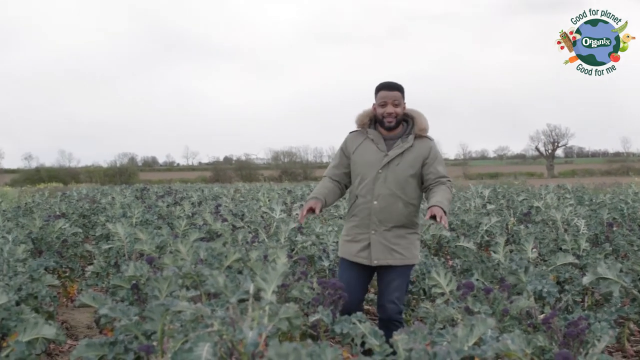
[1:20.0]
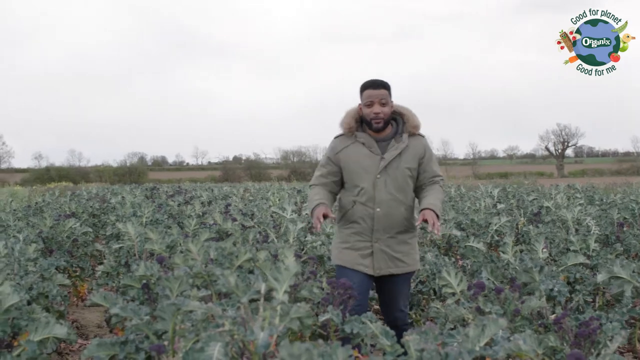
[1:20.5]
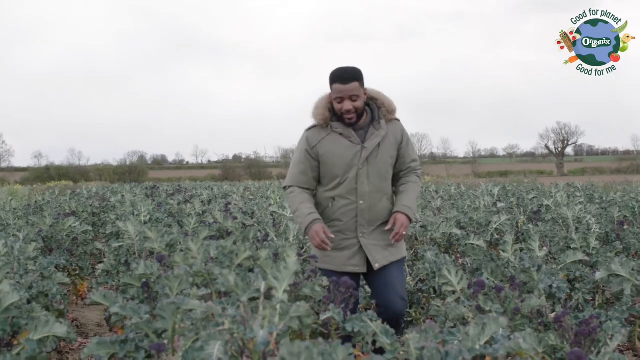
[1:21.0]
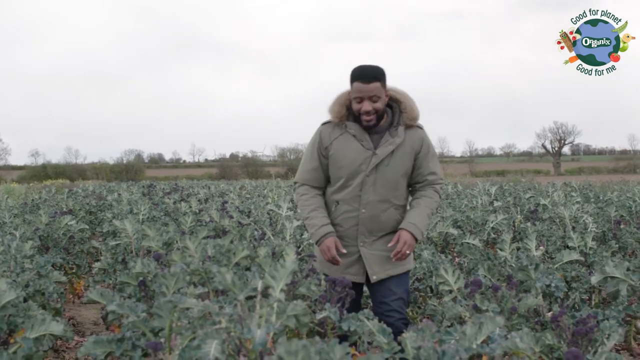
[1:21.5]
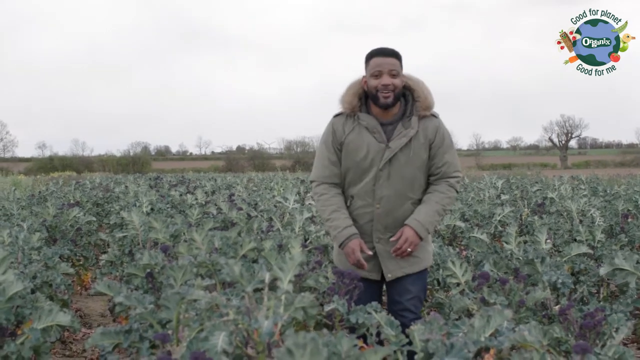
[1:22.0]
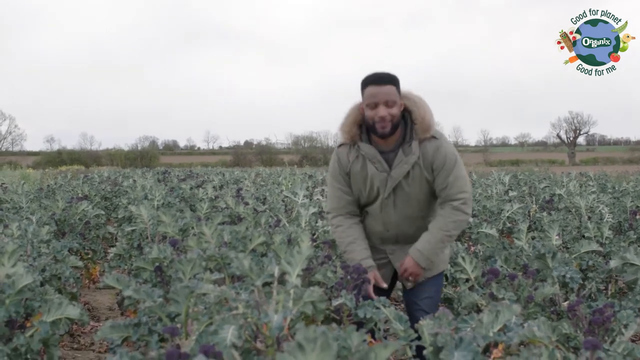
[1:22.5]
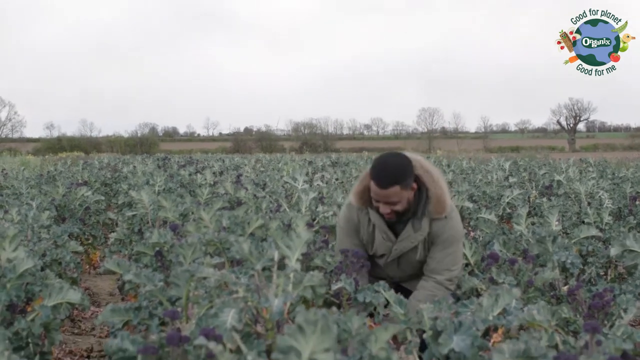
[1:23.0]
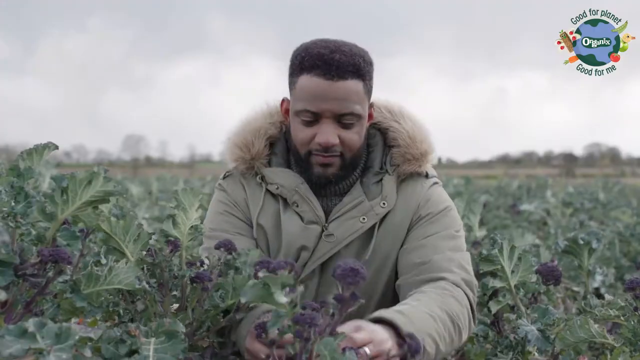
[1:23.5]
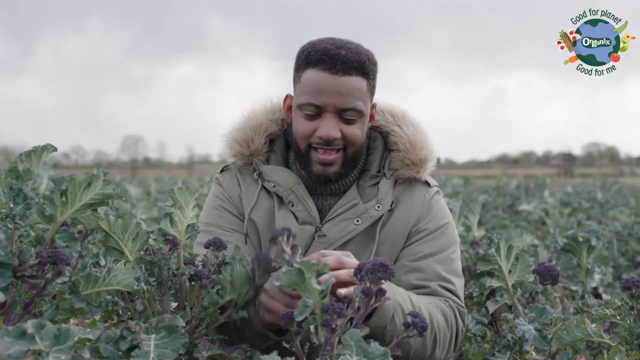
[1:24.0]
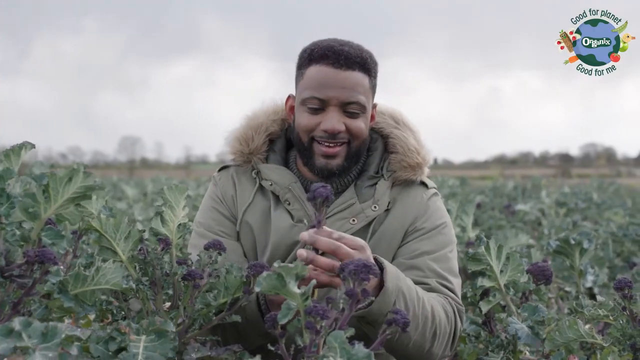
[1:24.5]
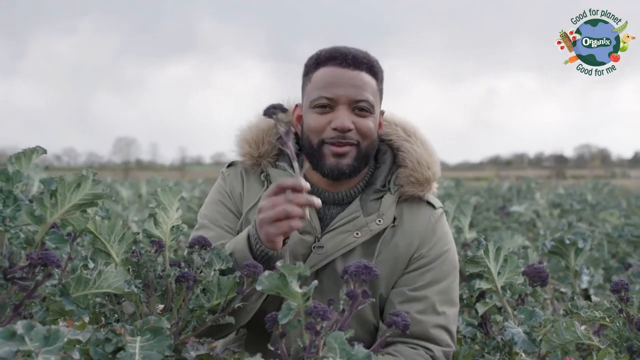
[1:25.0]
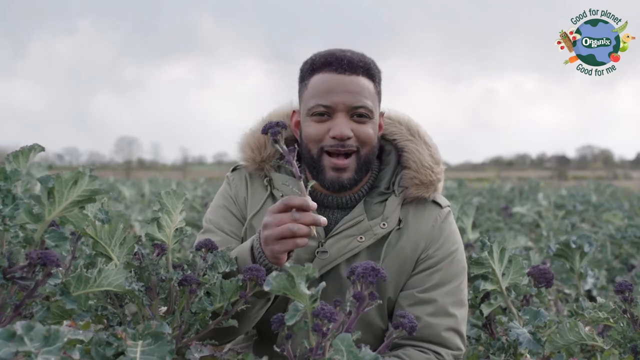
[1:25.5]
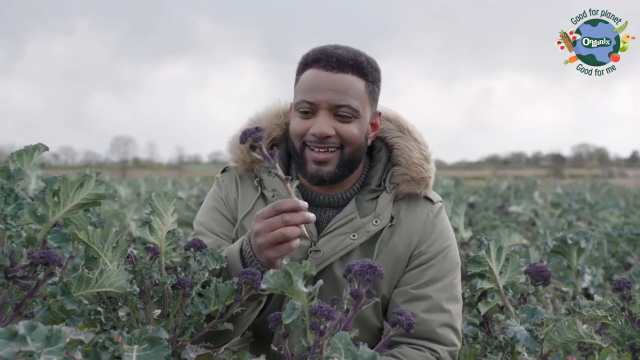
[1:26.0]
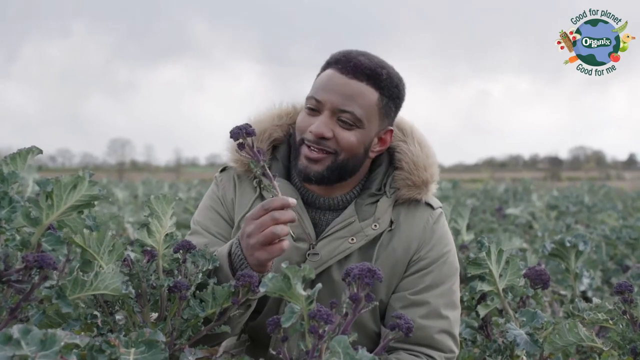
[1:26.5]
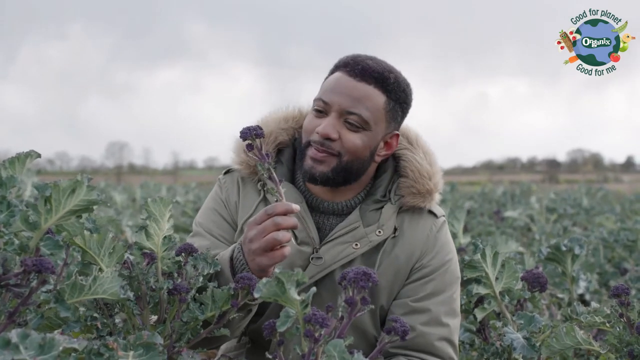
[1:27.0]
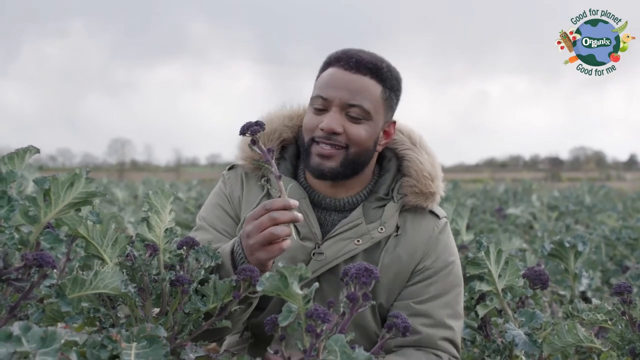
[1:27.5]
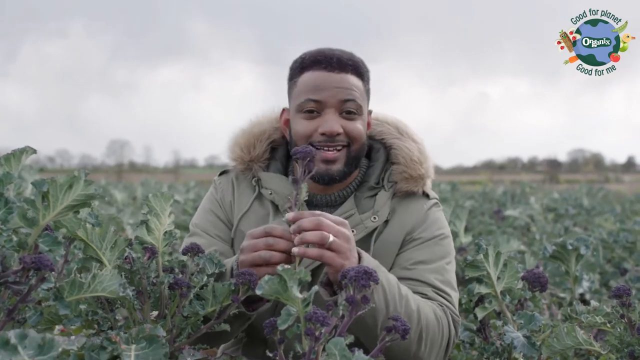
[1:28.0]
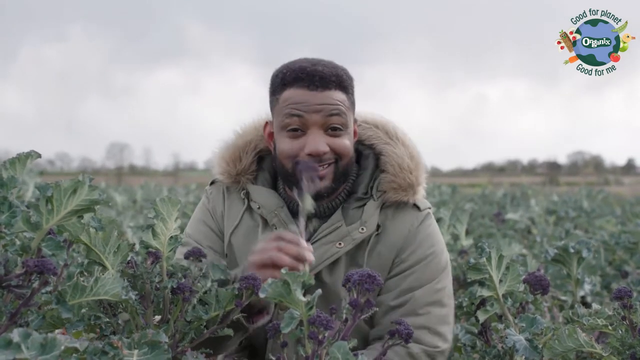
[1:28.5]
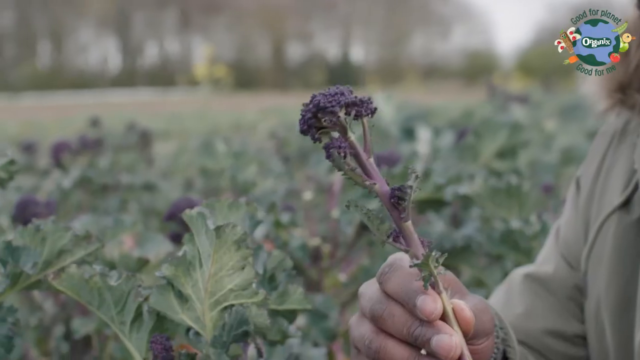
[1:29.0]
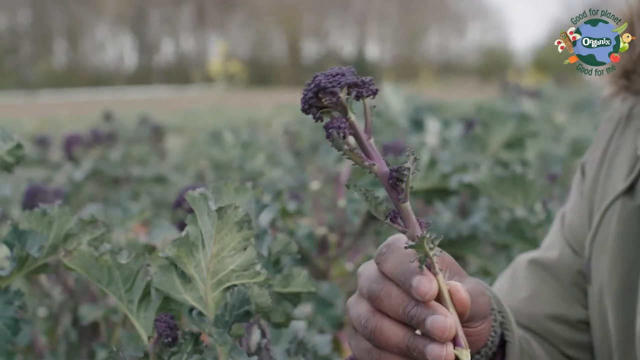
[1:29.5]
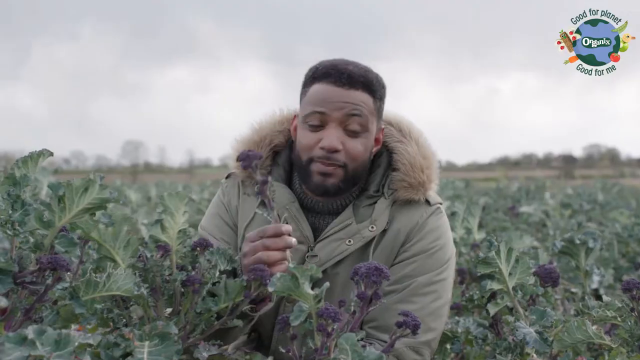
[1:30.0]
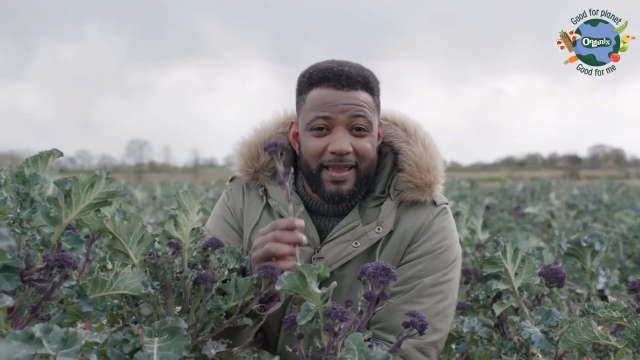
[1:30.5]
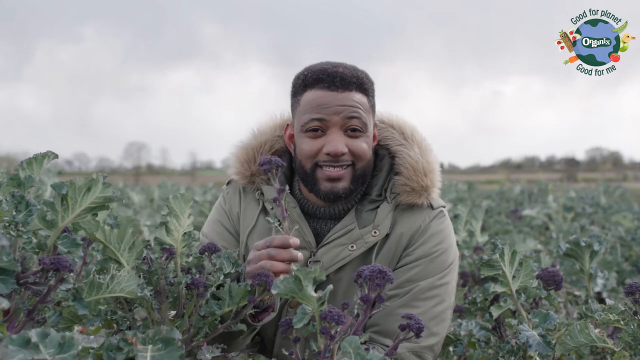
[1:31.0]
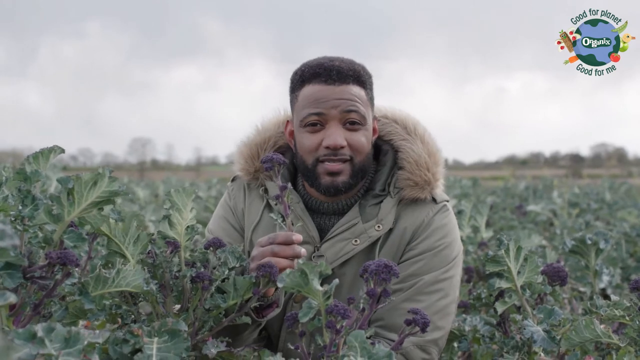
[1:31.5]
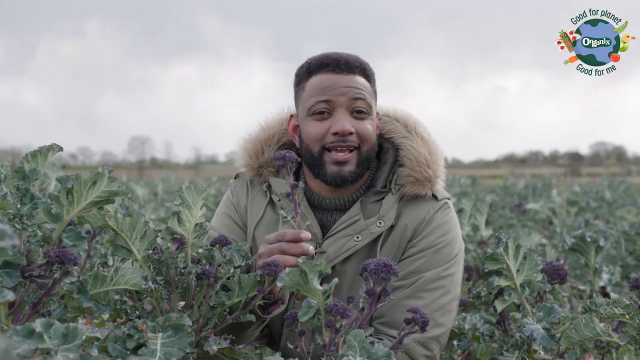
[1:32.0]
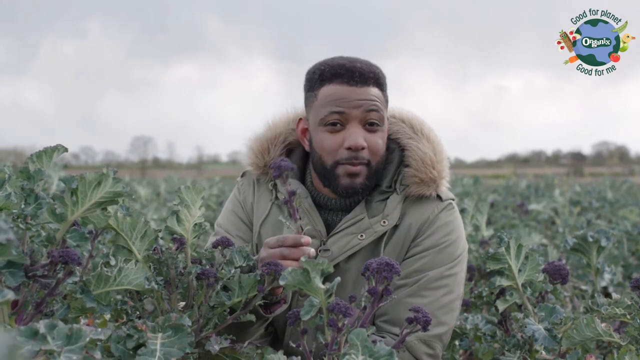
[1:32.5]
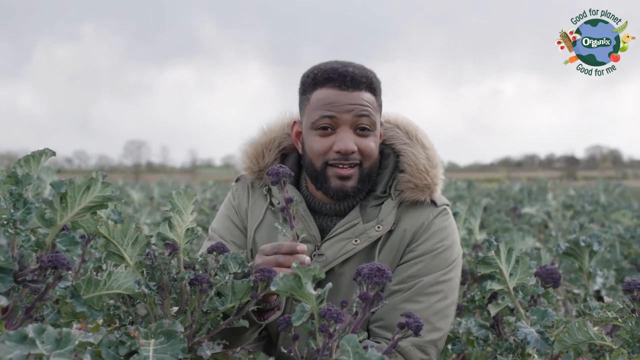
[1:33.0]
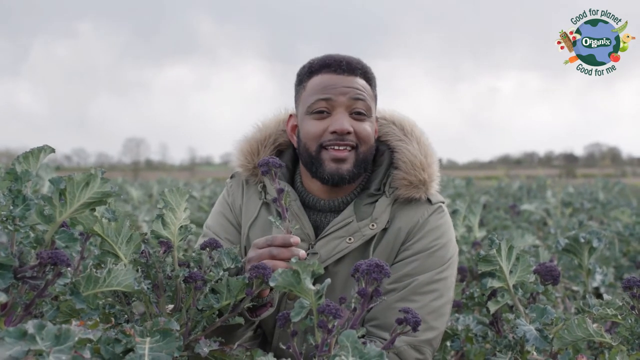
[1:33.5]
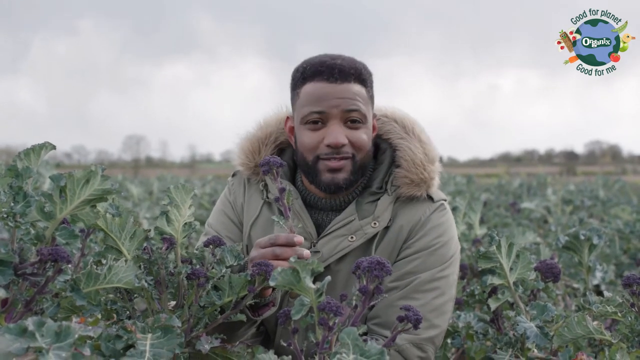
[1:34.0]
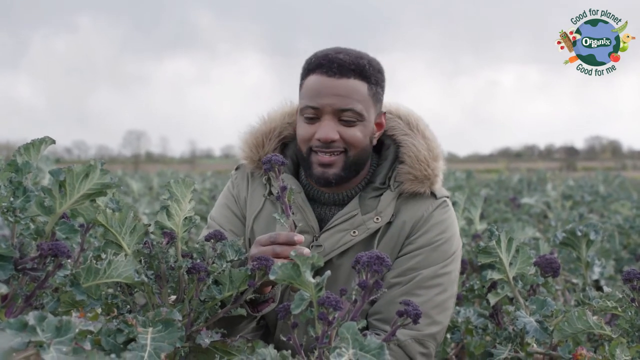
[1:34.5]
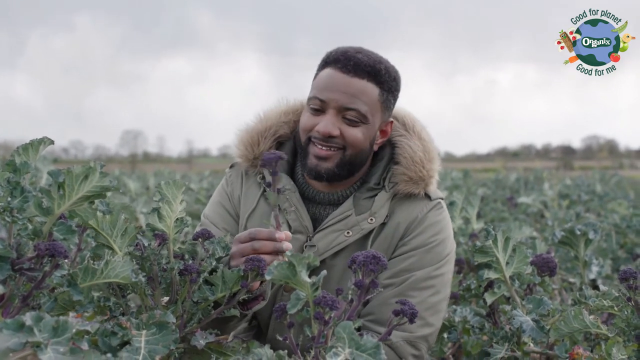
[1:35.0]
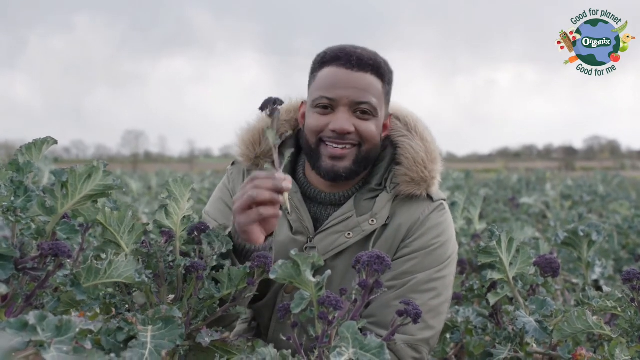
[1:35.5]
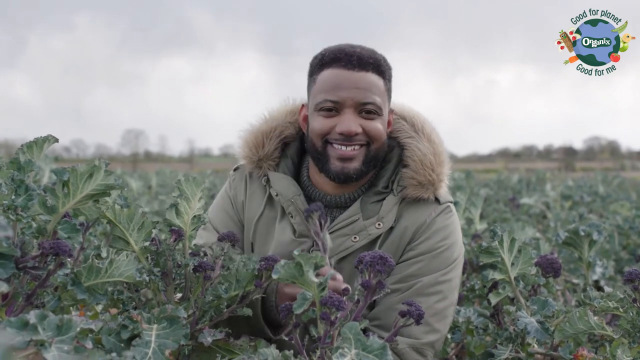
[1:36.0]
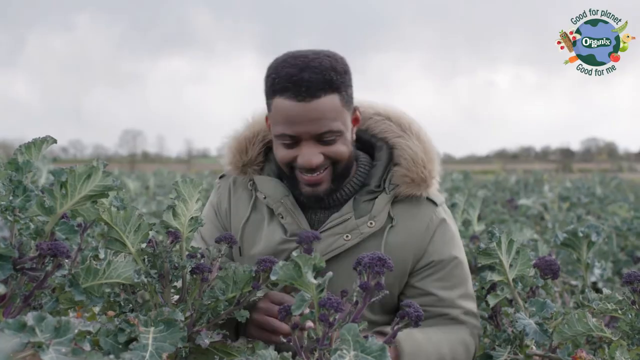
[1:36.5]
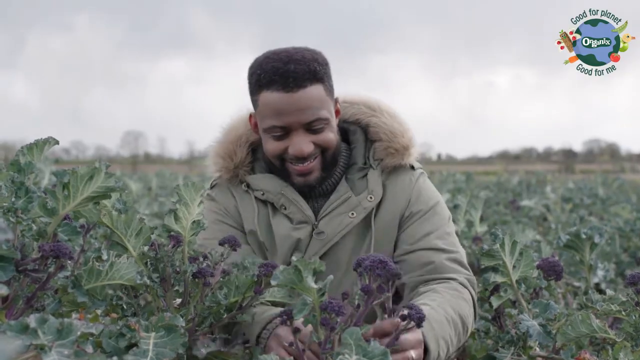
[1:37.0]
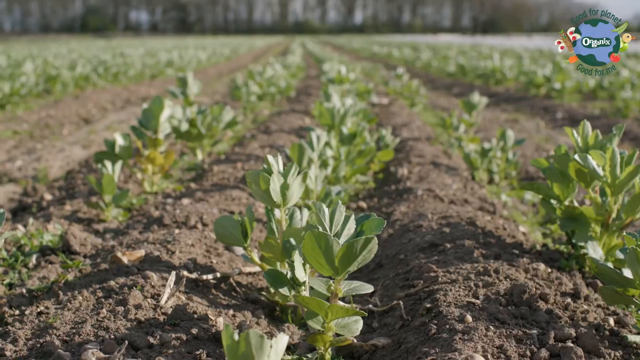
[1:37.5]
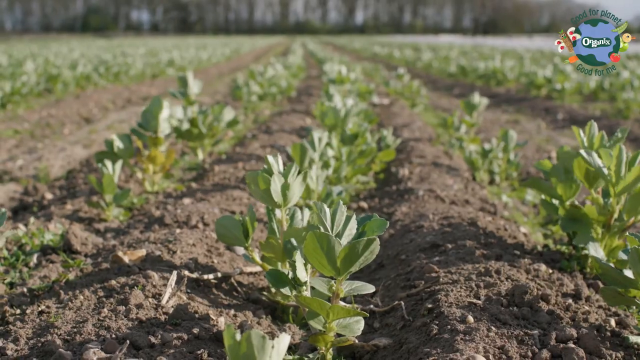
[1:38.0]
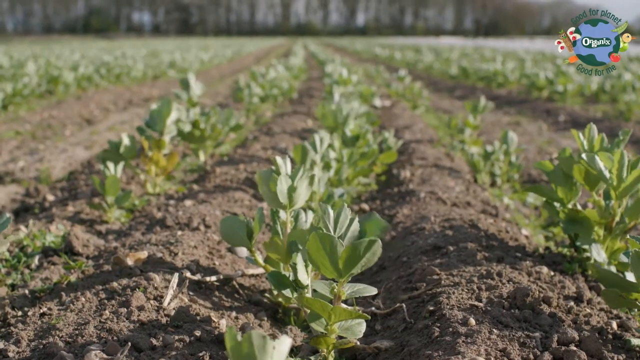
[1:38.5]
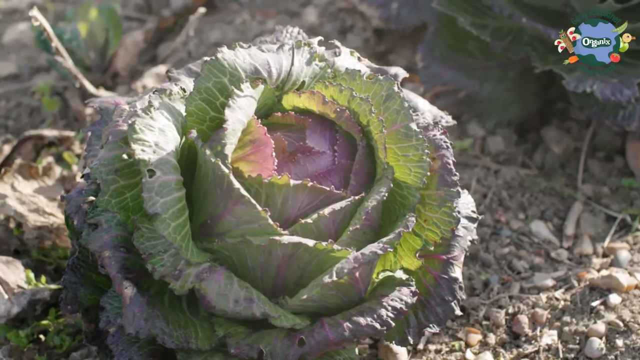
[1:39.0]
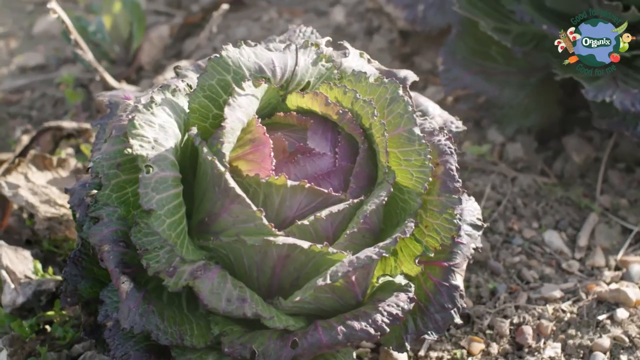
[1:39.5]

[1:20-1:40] JB wears a fluffy jacket; the setting around him looks very cold, with a lot of hay visible in the background. He shows a small plant and some lettuce. JB is then in his tractor, talking directly into the camera, apparently telling more about the farm and their farming methods. Next, JB is off the tractor with a plant in his hand, seemingly showing how well the plants have grown and how fresh they are. Other things grown on the farm are also shown. No animals are seen; JB is the only person visible.